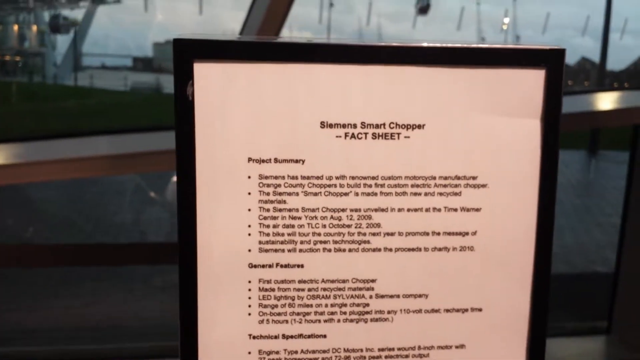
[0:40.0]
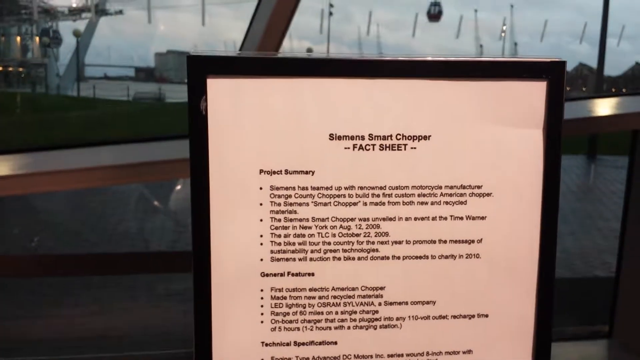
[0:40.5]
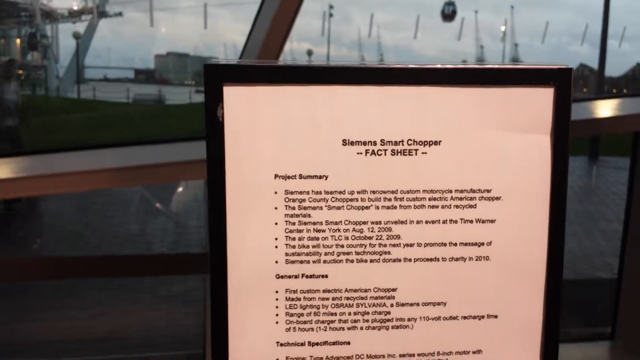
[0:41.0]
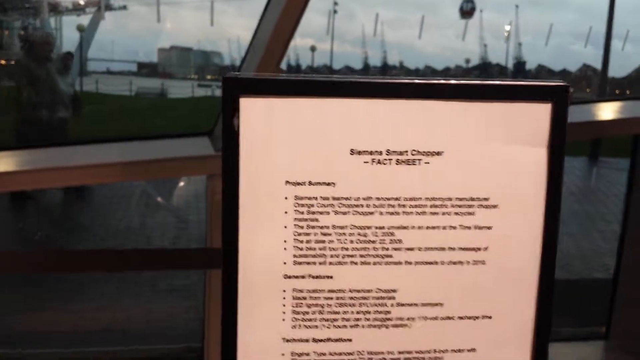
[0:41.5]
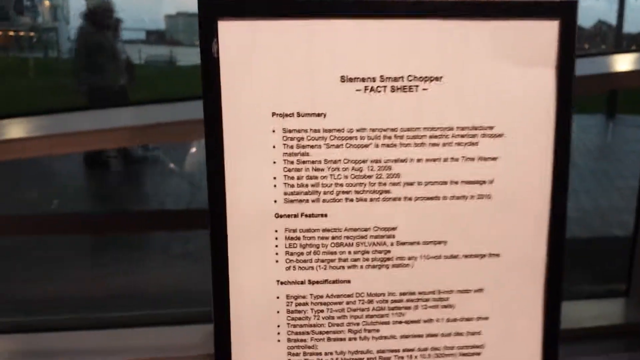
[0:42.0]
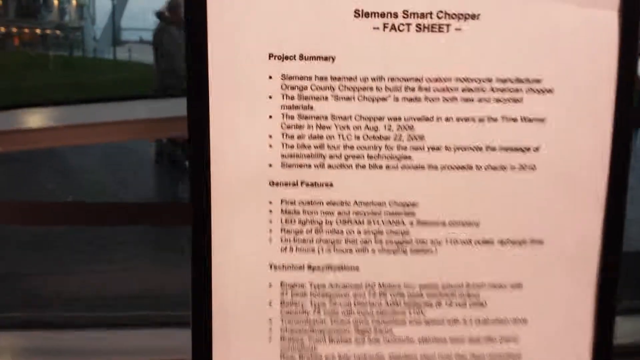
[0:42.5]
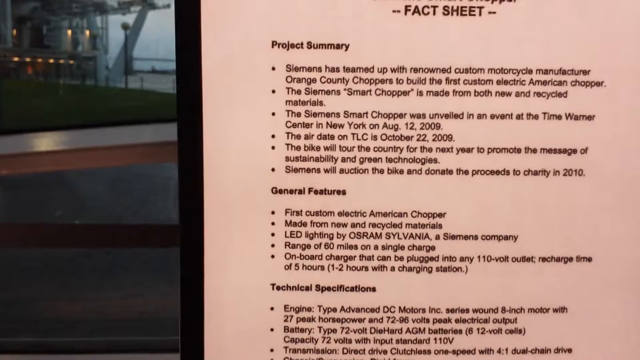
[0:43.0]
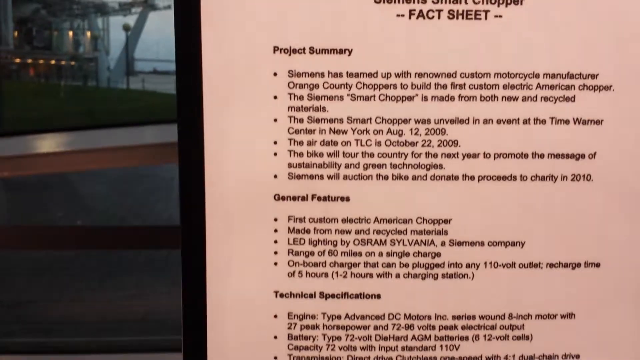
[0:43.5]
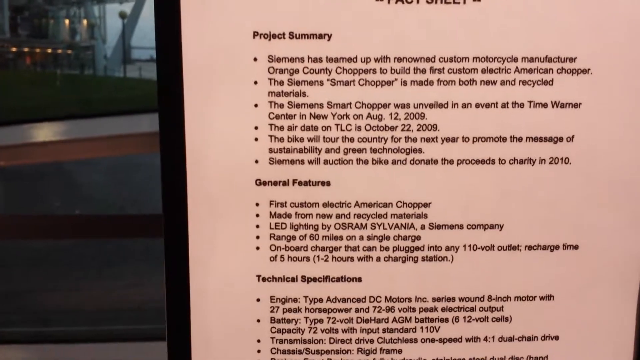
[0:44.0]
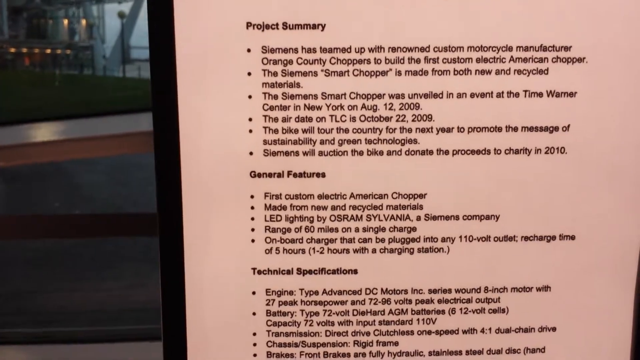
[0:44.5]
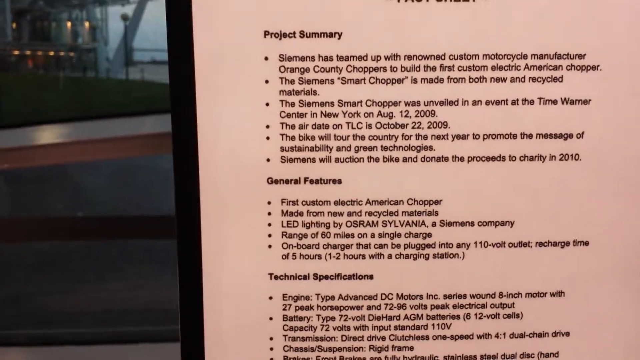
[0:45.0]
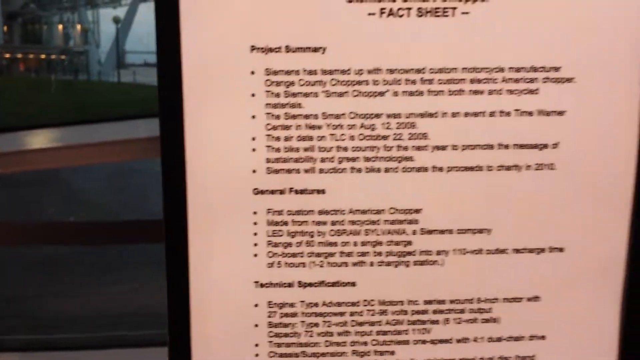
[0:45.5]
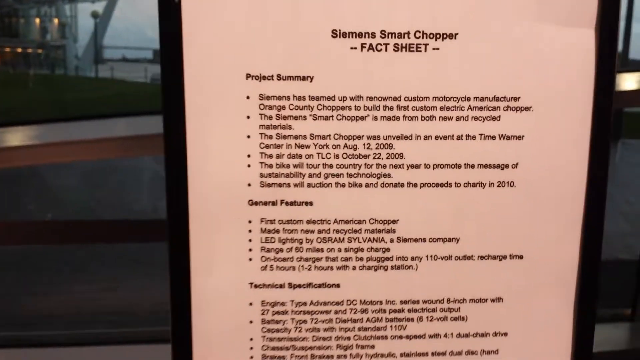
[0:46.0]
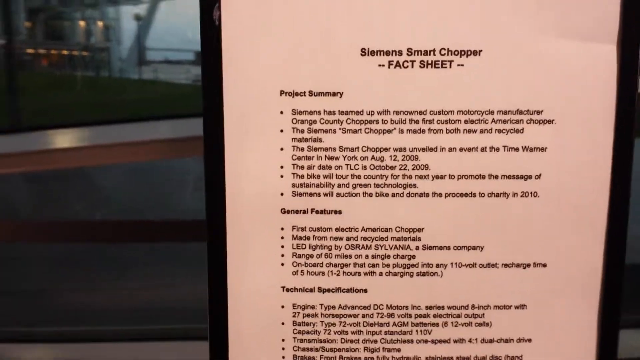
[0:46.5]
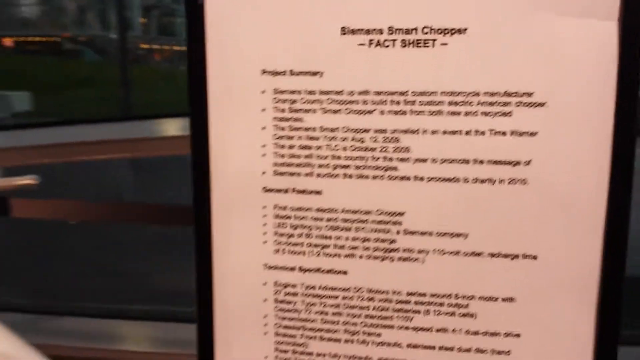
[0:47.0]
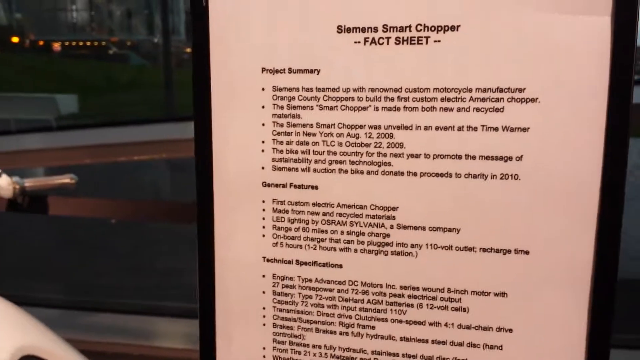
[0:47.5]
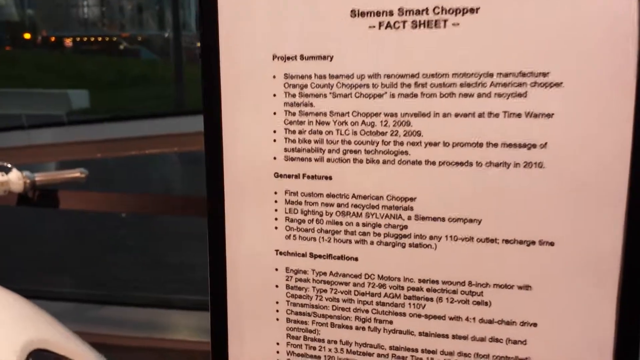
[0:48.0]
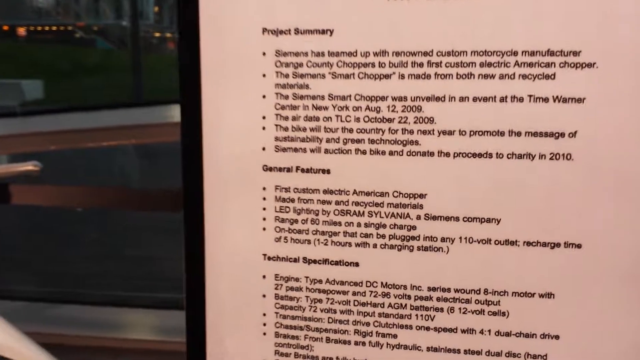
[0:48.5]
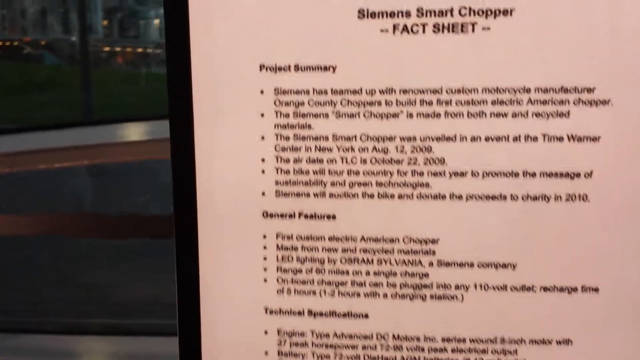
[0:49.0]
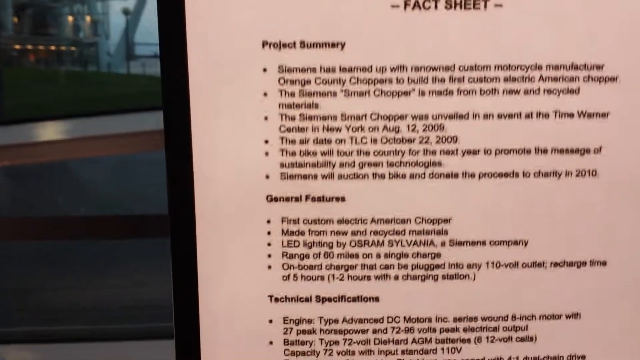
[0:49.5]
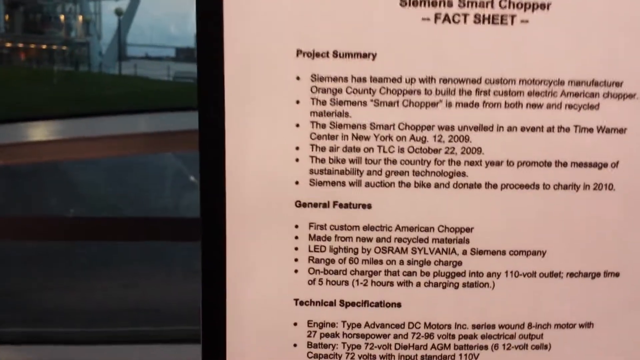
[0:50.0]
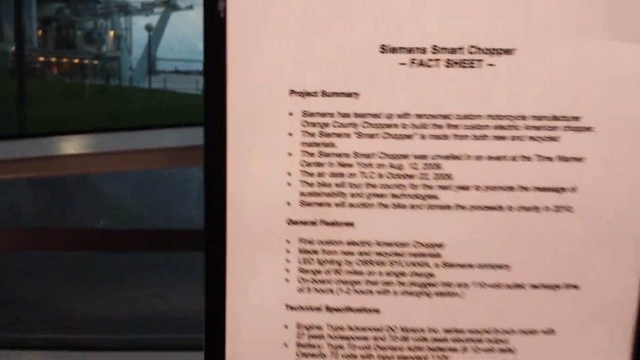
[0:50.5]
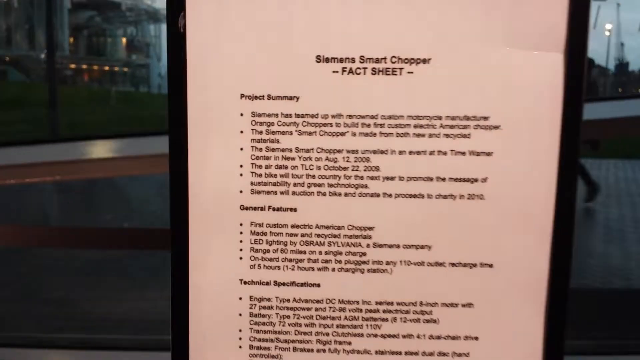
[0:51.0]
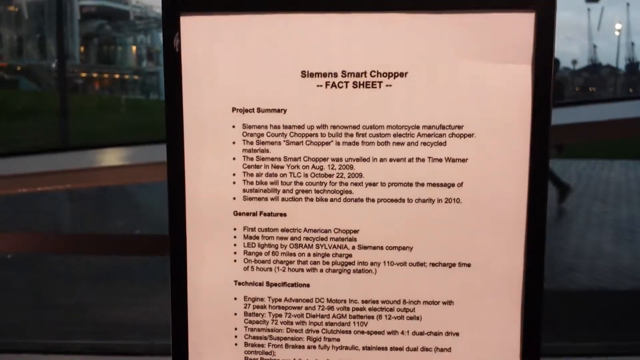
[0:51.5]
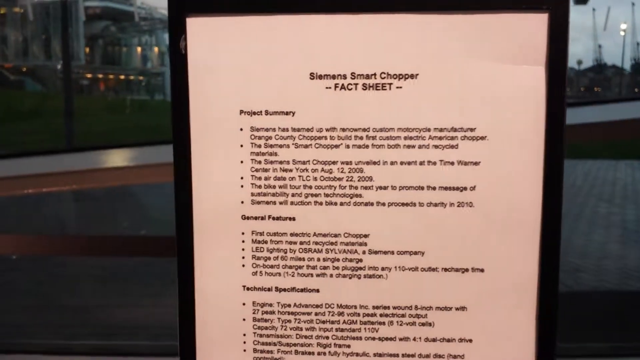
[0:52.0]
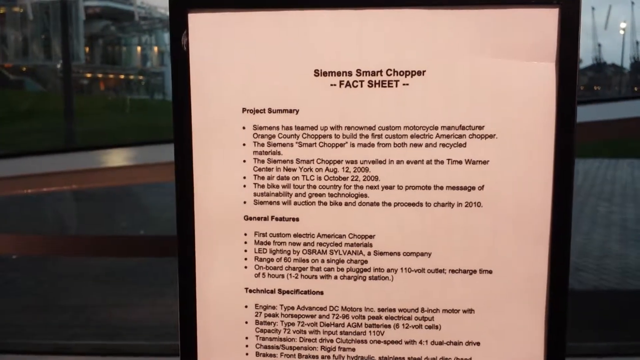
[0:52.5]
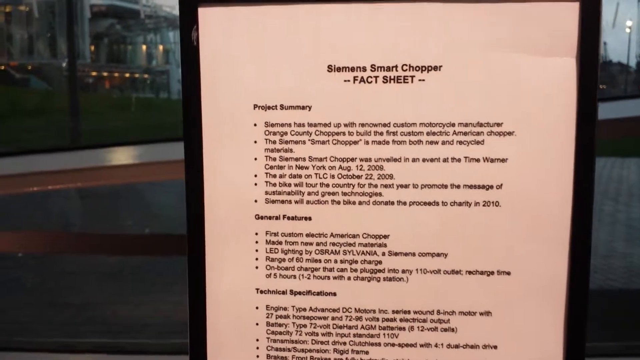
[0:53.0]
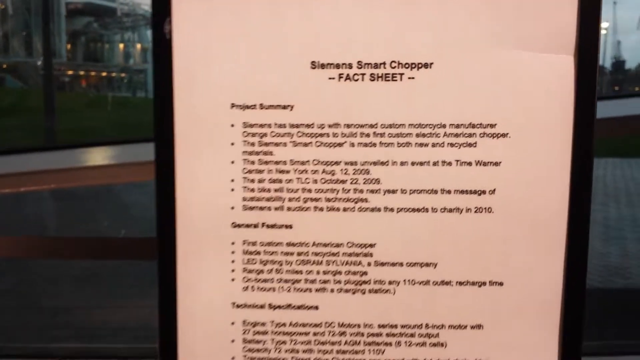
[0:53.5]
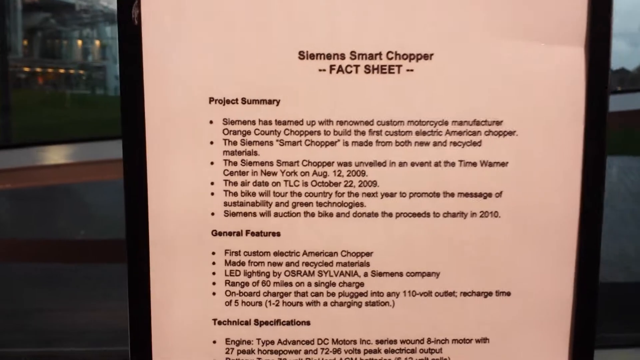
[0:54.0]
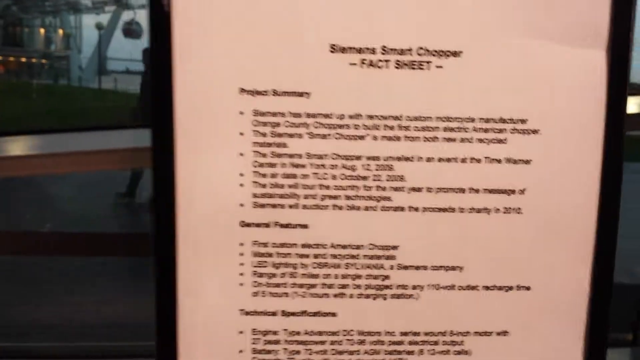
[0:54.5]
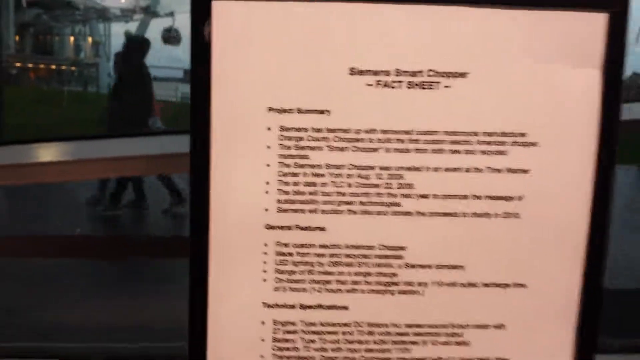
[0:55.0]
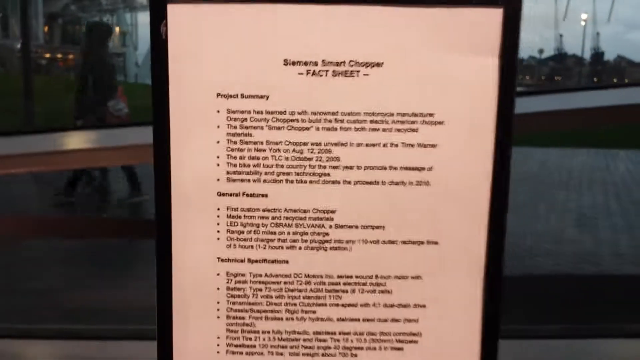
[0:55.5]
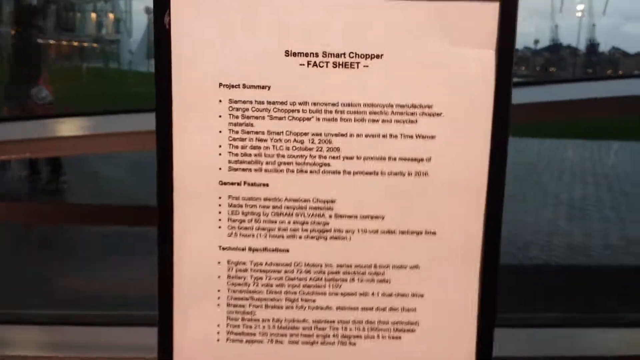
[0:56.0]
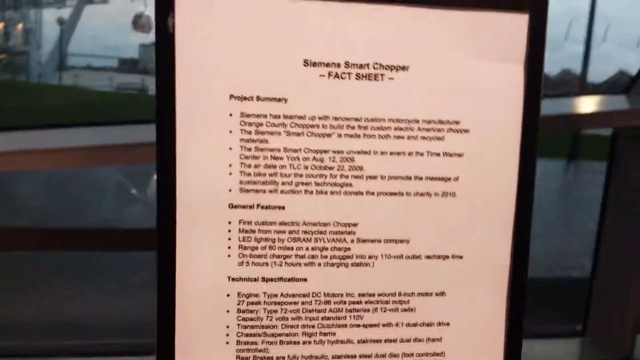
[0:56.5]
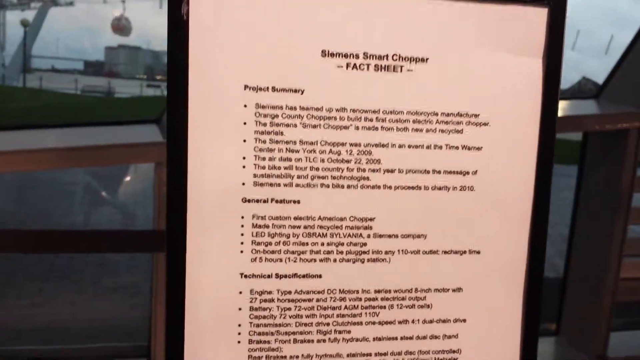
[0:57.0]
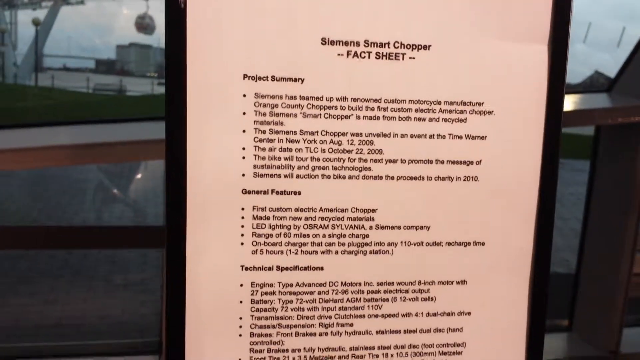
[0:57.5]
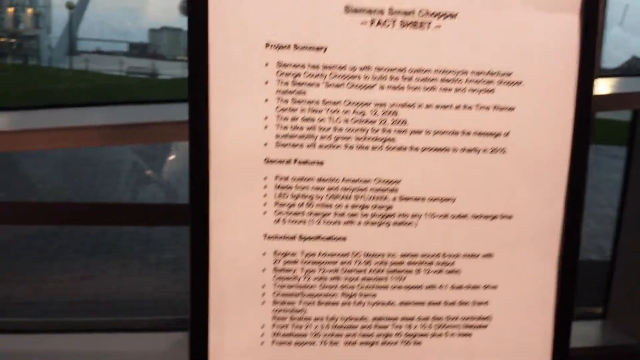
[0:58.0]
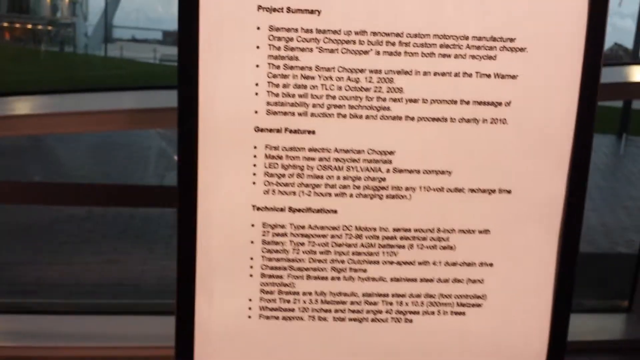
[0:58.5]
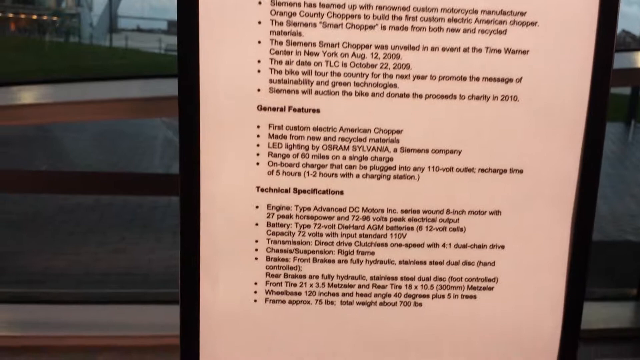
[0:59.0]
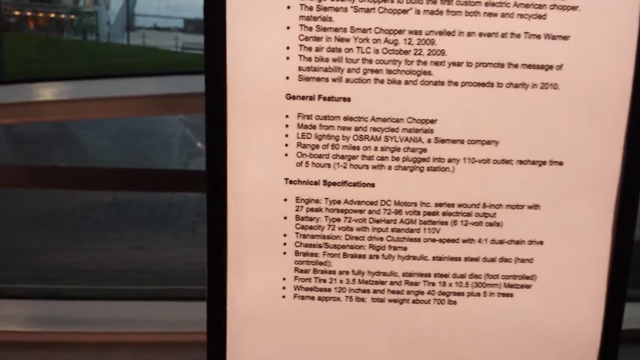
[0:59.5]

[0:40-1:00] A piece of paper carries the title "Siemens Smart Chopper Fact Sheet". Near the top are two sections, one titled "Project Summary" and the other "General Features". The camera moves down a little, revealing a third section titled "Technical Specification". Each section contains bullet points. The camera shakes, zooming in and out, so the words are sometimes clear and sometimes not, moving mostly up and down the paper. Some people walk around in the background. Under General Features, the first item says "First Custom Electric American Chopper", and the next one says it is made from new and recycled materials. Behind the paper is a wooden railing, apparently holding people away. On the left side in the back, there is green grass on the side of a building with many white lights near its bottom.